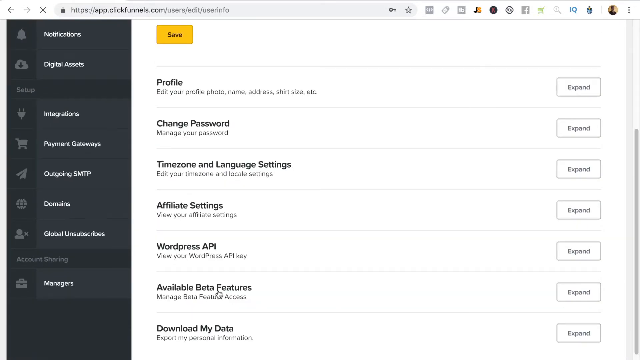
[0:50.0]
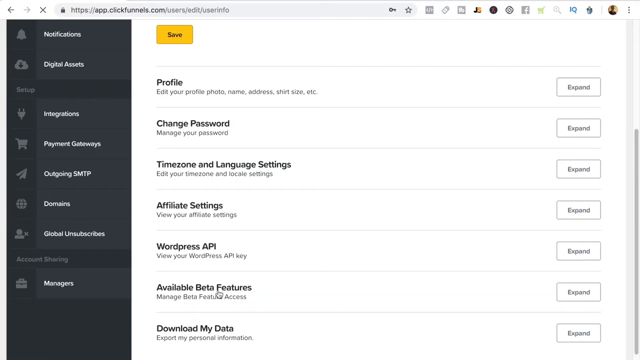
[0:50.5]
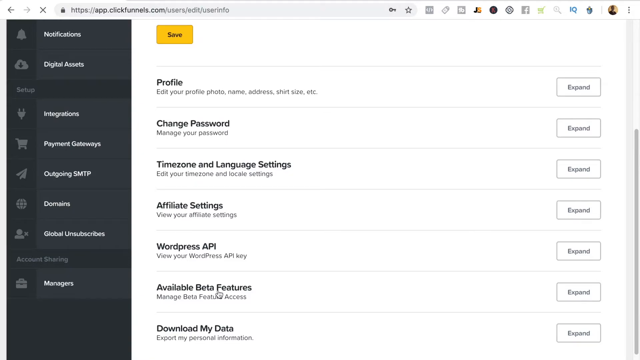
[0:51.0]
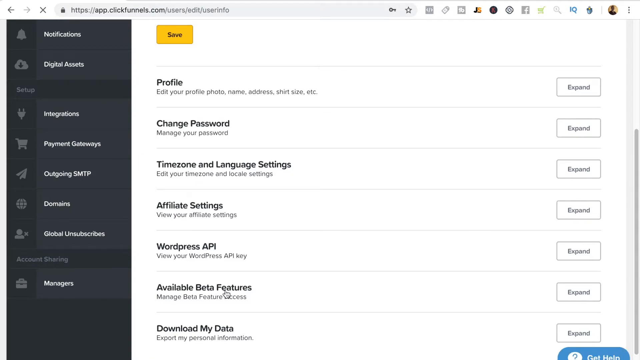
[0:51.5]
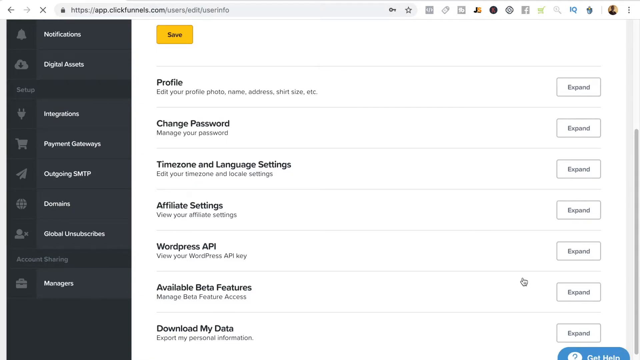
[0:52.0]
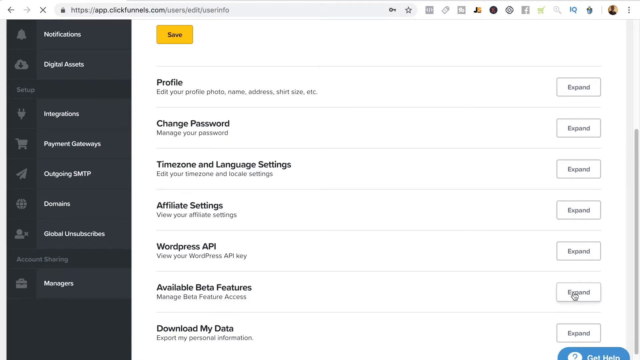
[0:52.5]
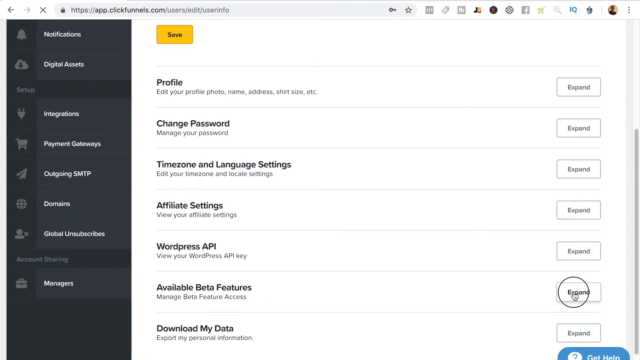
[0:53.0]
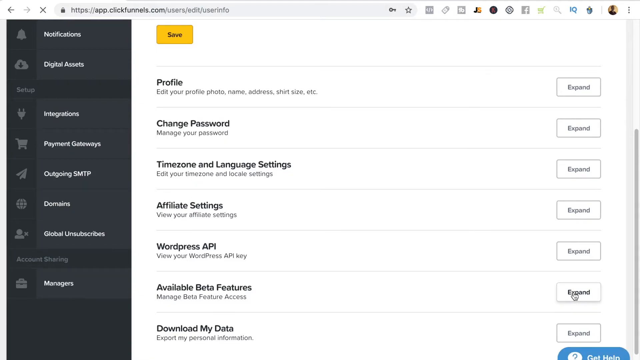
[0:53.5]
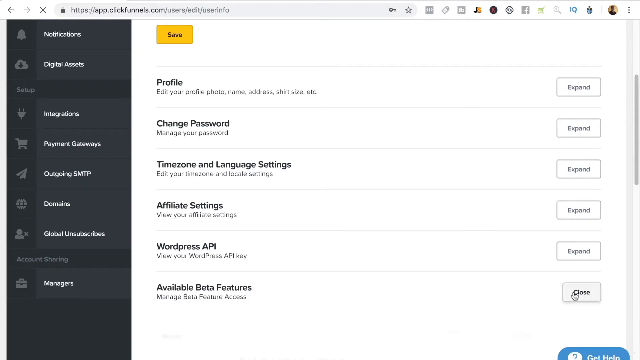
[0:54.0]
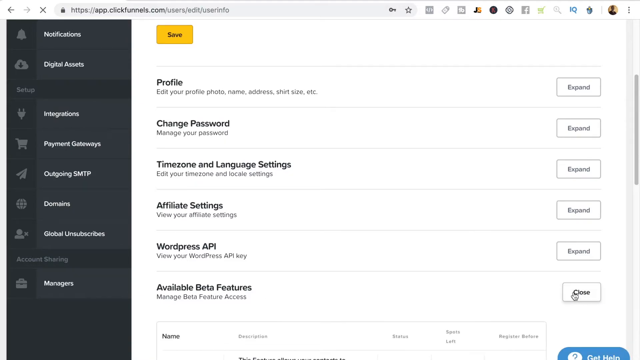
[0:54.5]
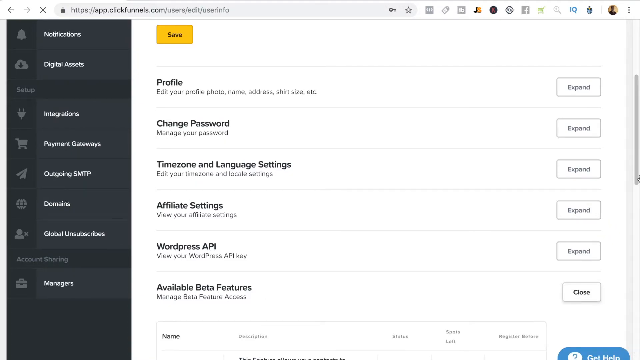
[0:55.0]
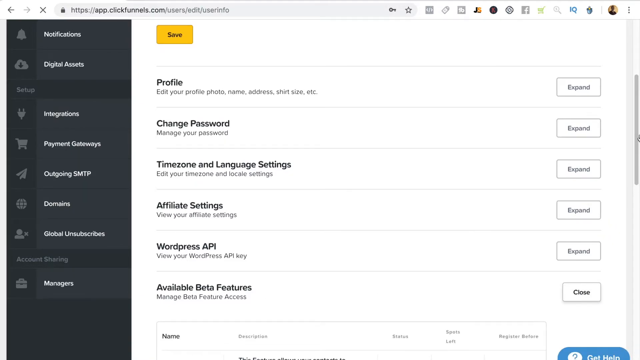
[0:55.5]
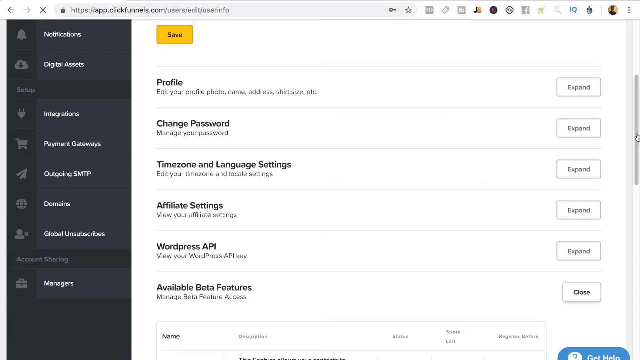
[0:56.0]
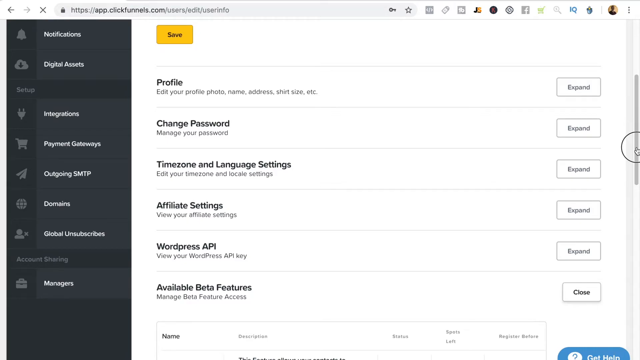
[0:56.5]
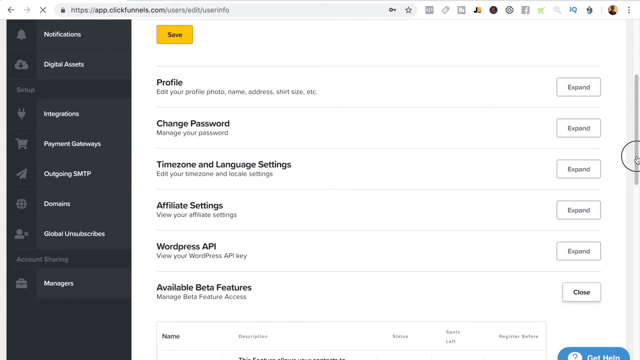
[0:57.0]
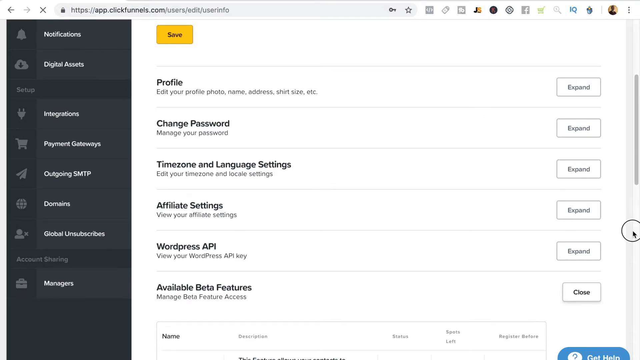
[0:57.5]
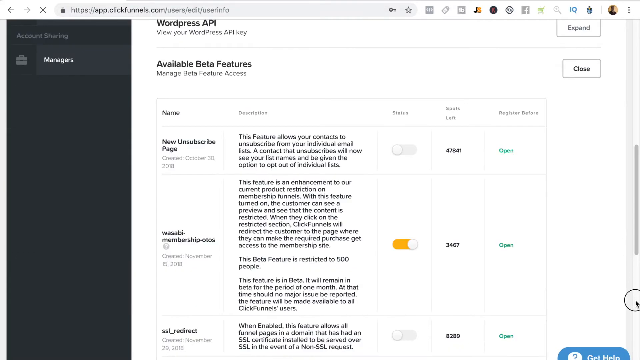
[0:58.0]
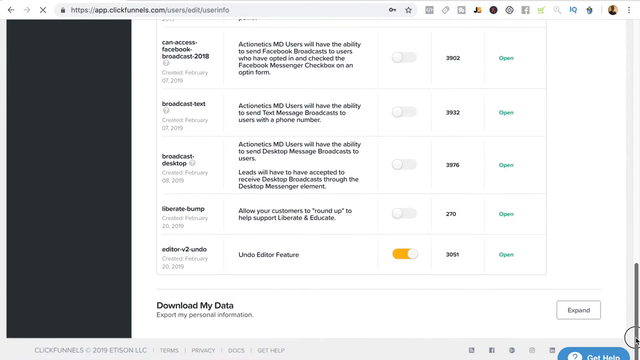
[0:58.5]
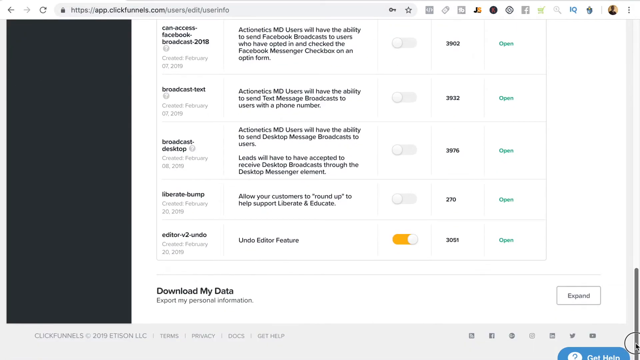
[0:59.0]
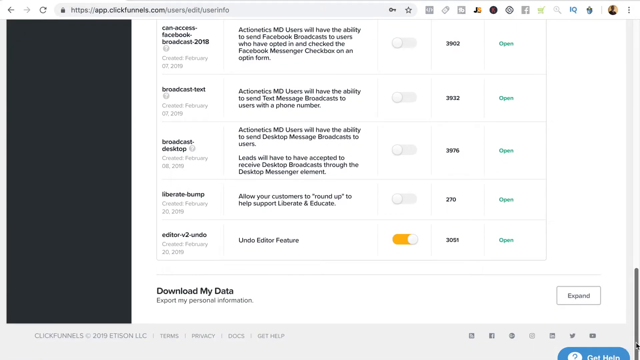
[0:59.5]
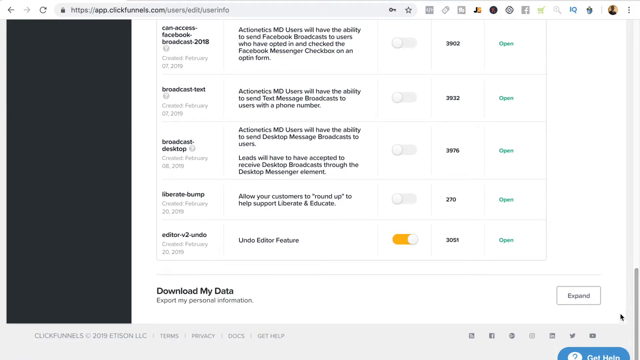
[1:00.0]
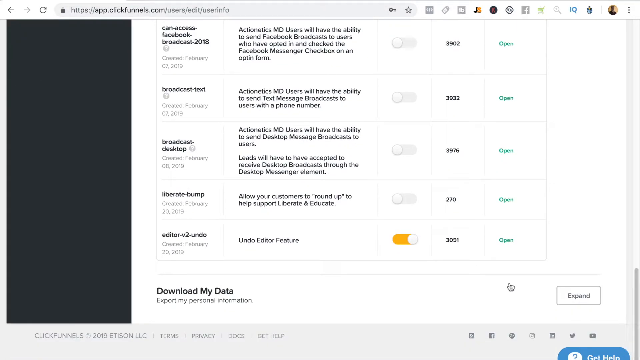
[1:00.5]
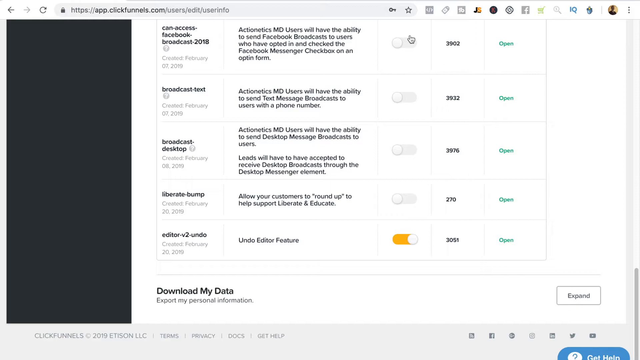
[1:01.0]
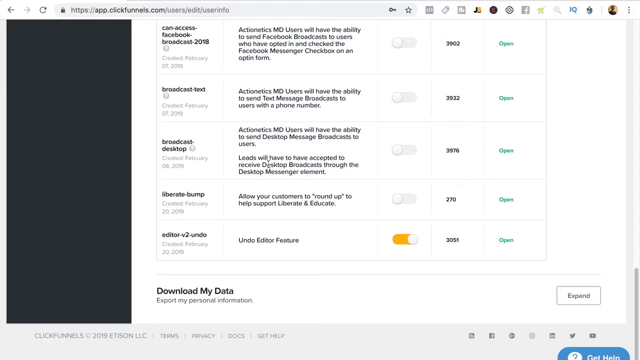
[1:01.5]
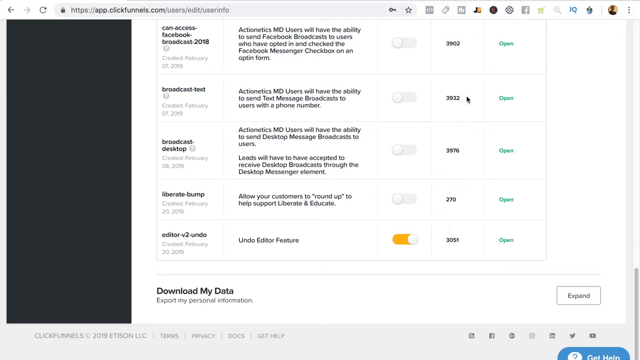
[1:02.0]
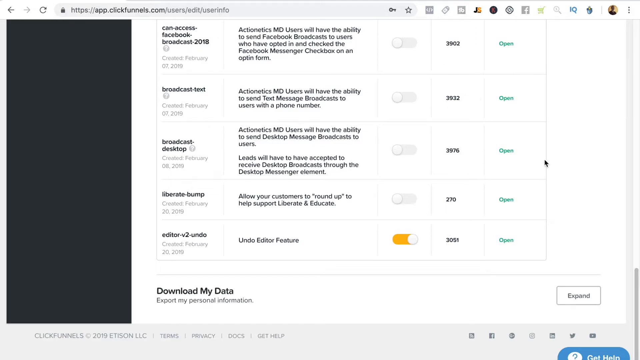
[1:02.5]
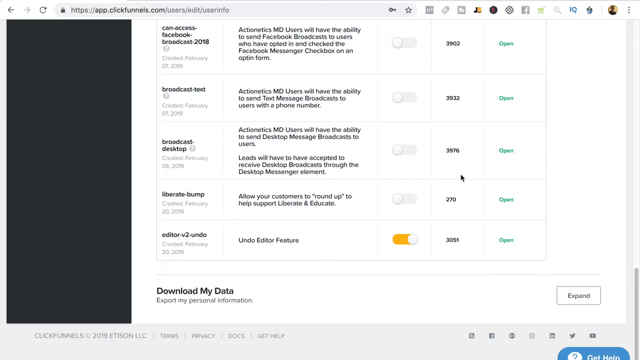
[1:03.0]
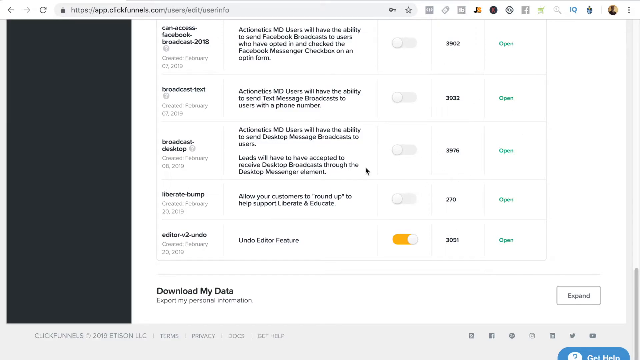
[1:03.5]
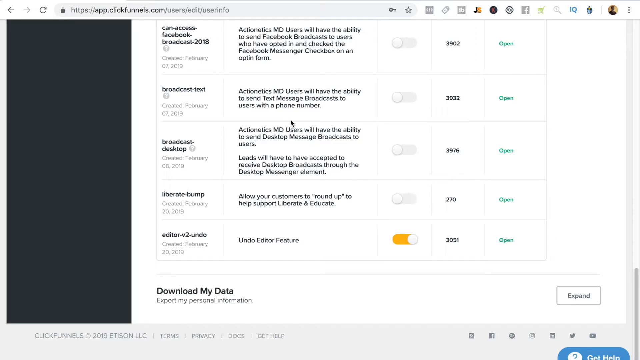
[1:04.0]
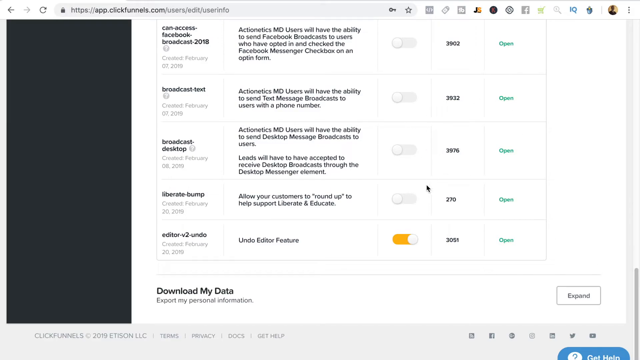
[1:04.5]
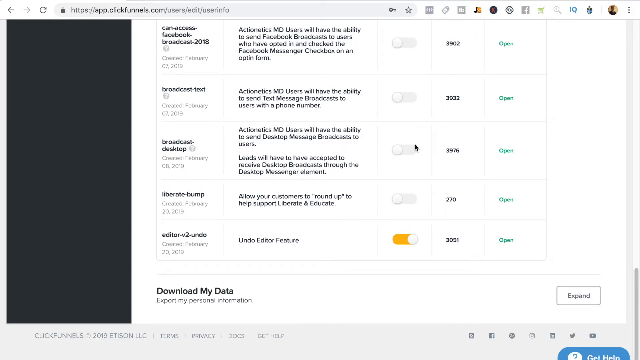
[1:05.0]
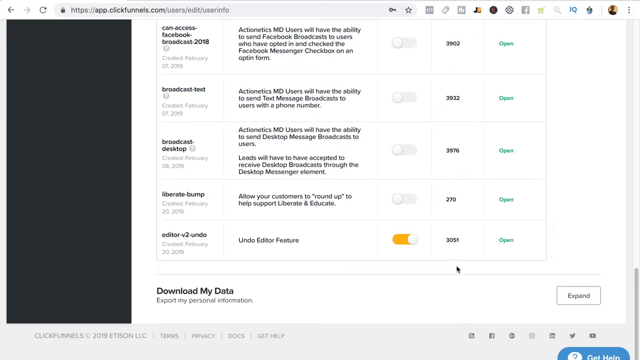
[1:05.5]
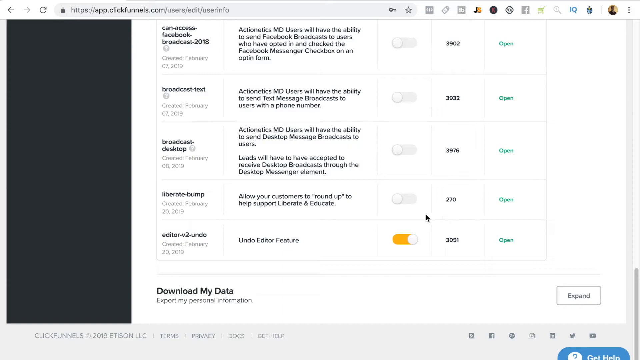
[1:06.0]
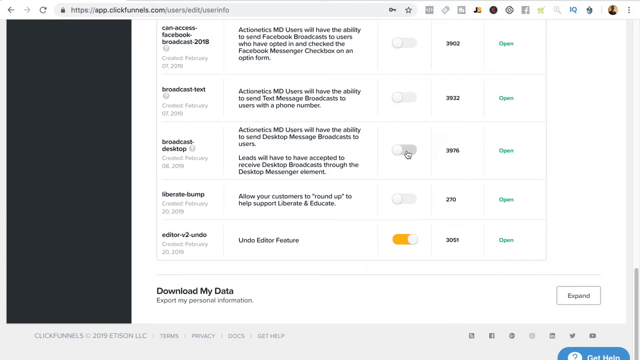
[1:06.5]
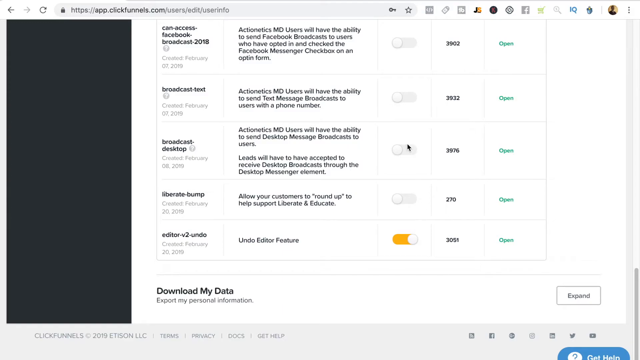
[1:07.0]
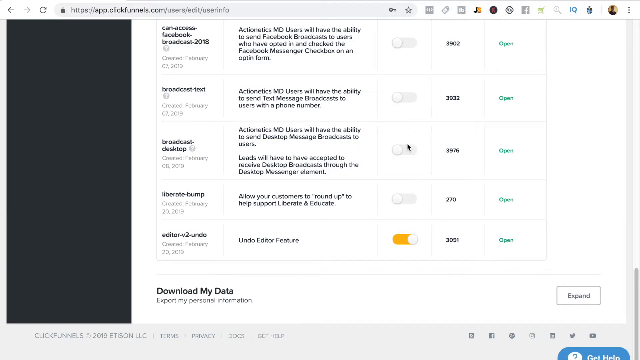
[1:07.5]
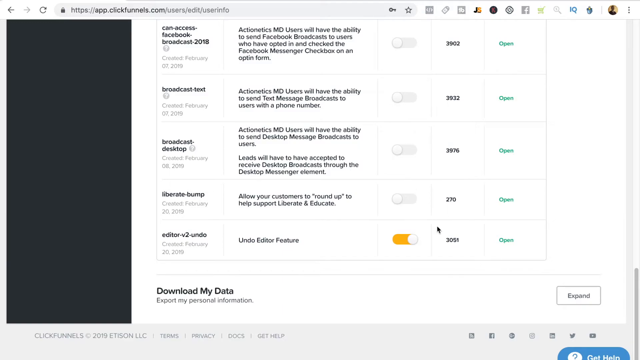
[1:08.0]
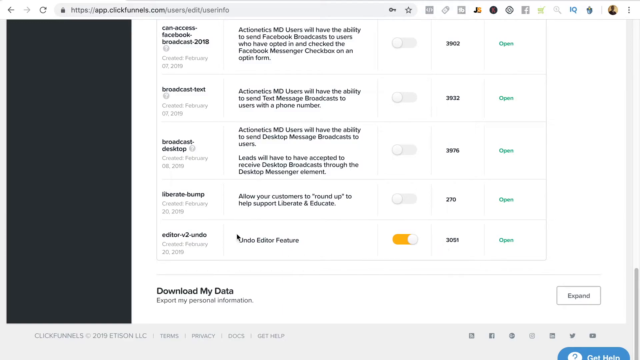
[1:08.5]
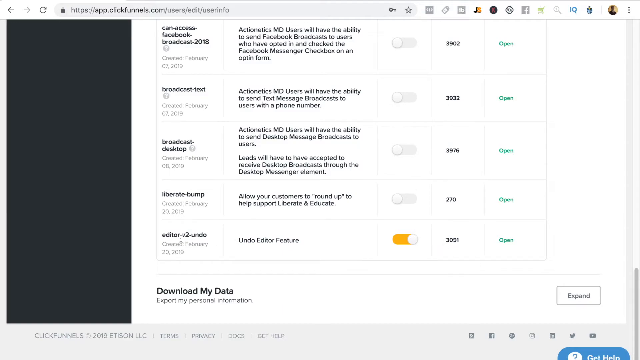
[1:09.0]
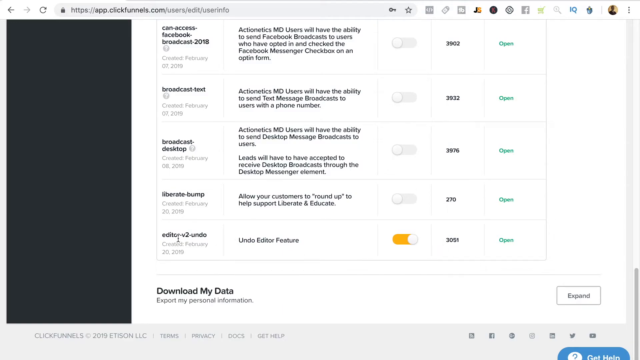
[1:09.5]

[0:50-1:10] On the same page, the view scrolls down past the yellow save button to more options: "profile, edit your profile, photo, name, address, shirt size, etc.," "change password, manage your password," "time zone and language settings, edit your time zone and locale settings," "affiliate settings, view your affiliate settings," "WordPress API, view your WordPress API key," "available beta features, manage beta feature access," and "download my data, export my personal information." To the right of each are boxes with the word "expand." The mouse hovers over the expand button for available beta features and clicks it, indicated by the small circle around the cursor. The available beta features area expands and the expand button turns into a close button. The cursor clicks and drags the scroll bar down, the small circle showing while it clicks.